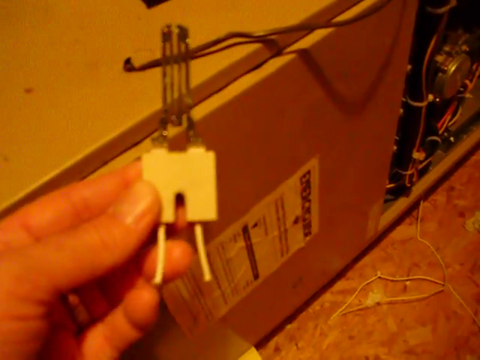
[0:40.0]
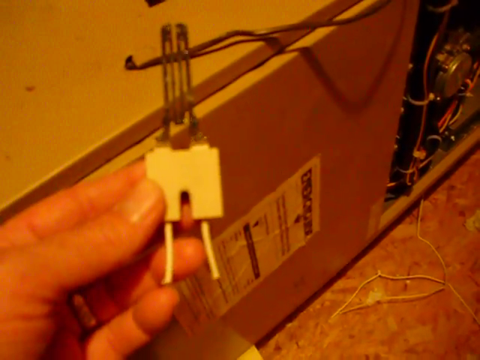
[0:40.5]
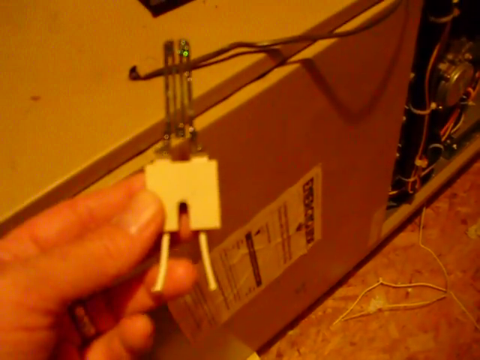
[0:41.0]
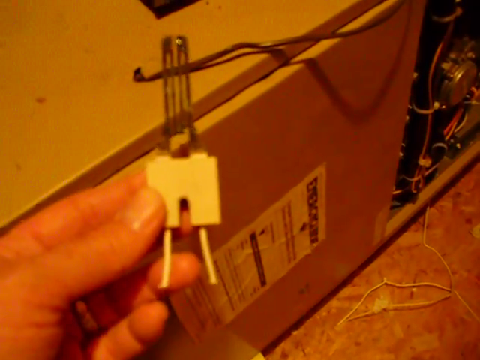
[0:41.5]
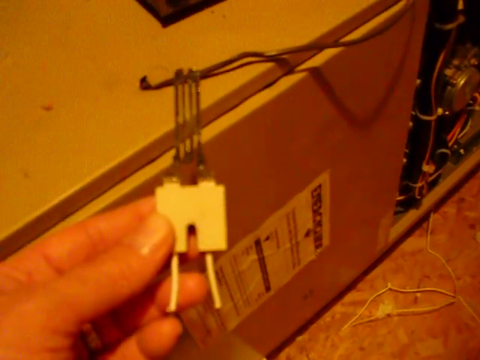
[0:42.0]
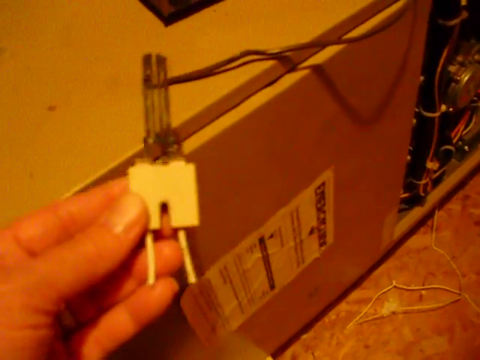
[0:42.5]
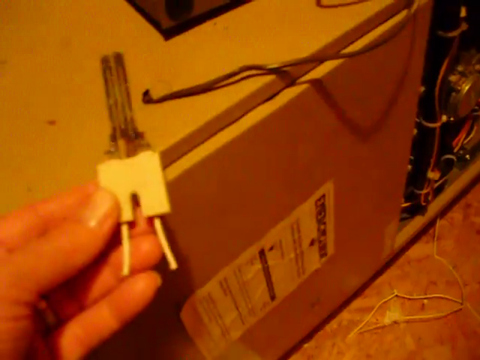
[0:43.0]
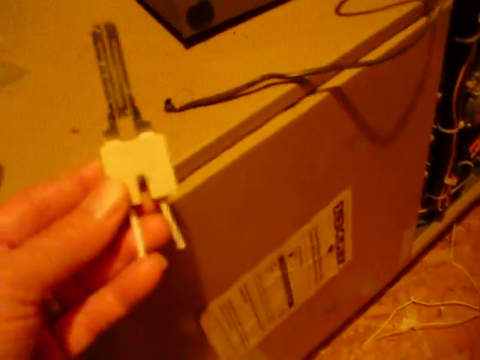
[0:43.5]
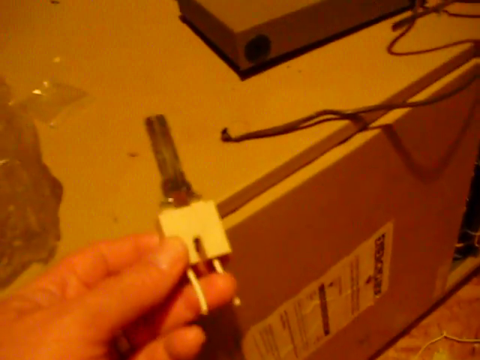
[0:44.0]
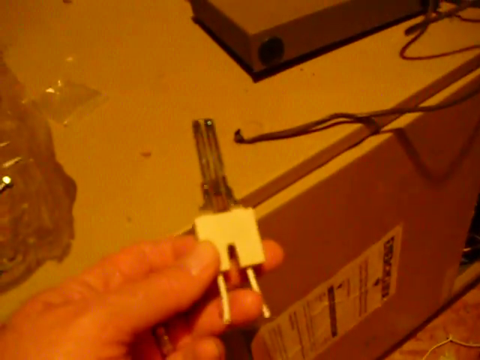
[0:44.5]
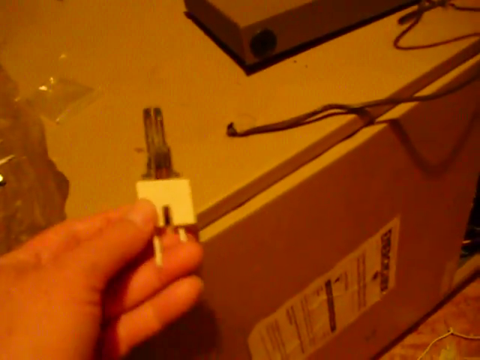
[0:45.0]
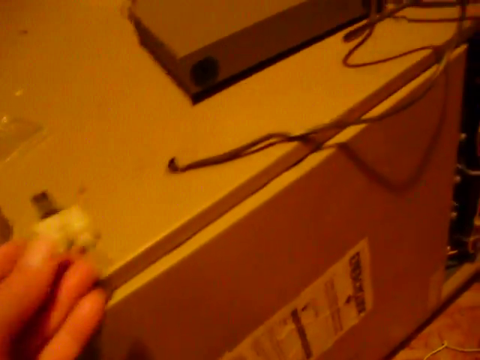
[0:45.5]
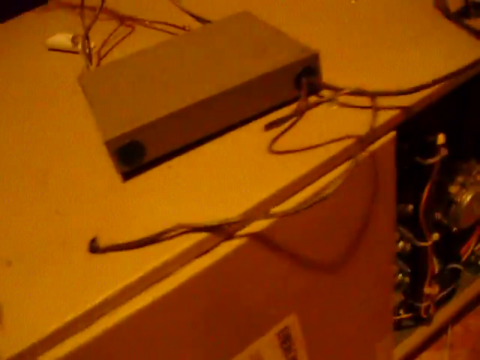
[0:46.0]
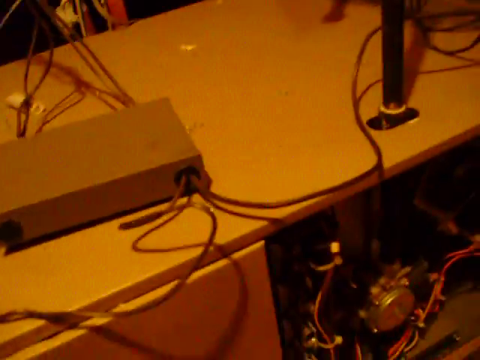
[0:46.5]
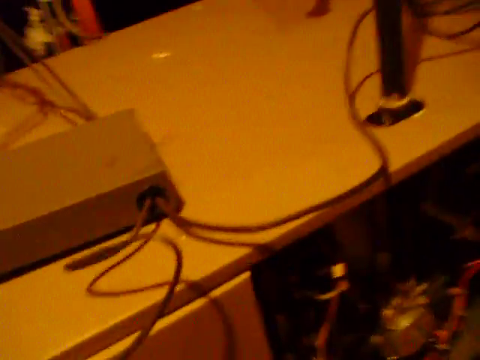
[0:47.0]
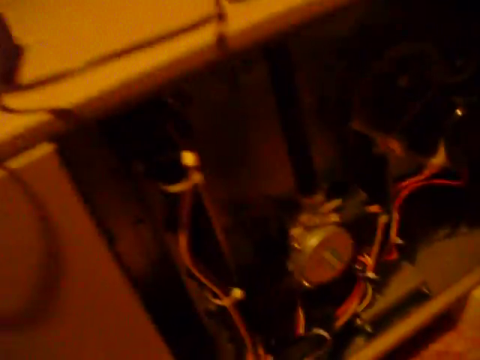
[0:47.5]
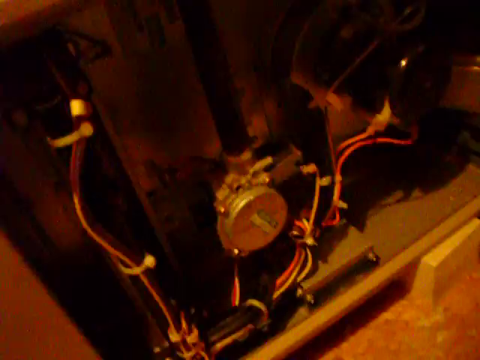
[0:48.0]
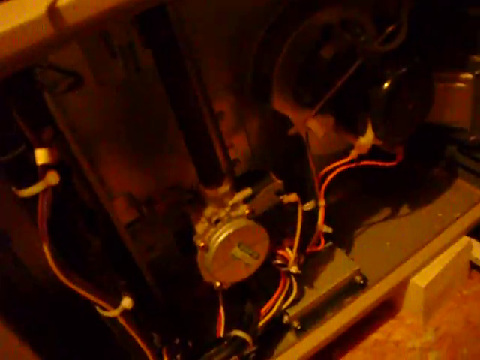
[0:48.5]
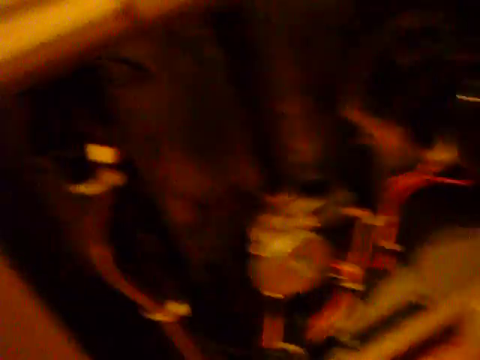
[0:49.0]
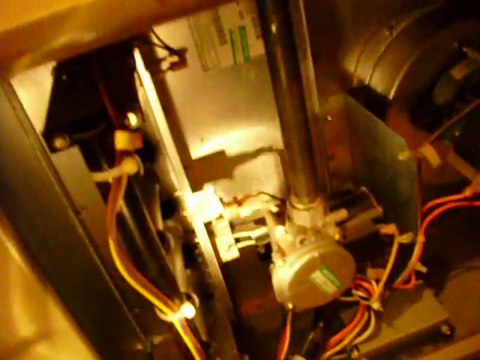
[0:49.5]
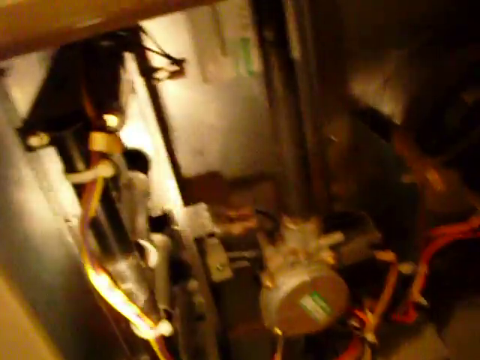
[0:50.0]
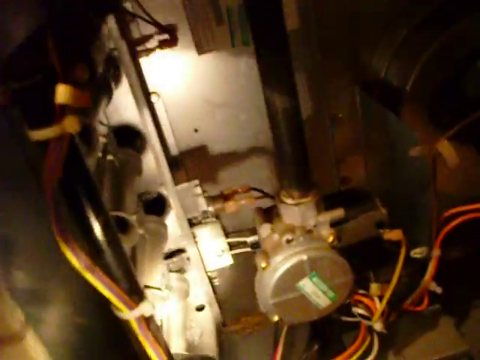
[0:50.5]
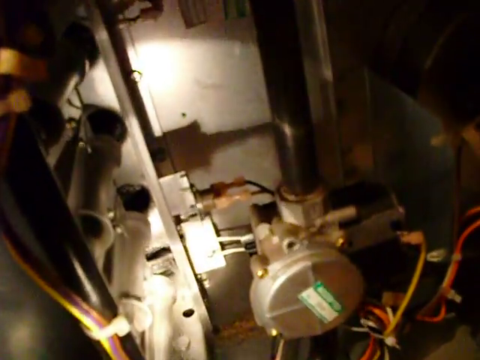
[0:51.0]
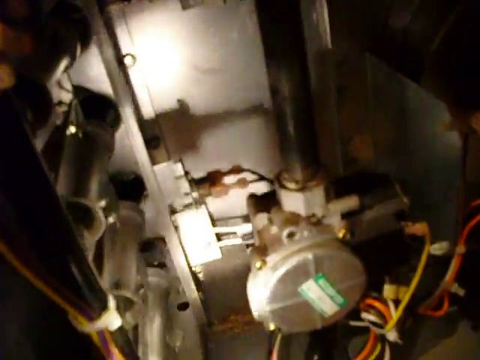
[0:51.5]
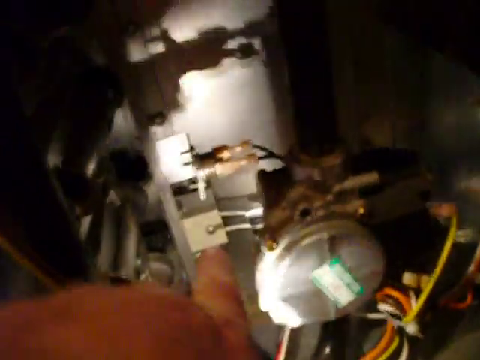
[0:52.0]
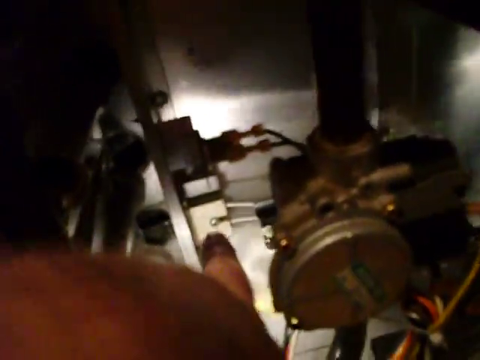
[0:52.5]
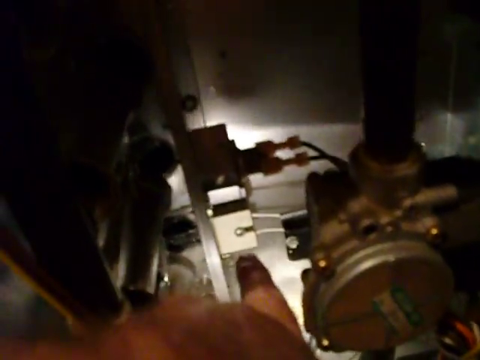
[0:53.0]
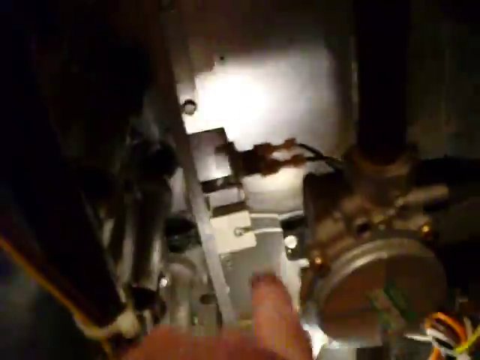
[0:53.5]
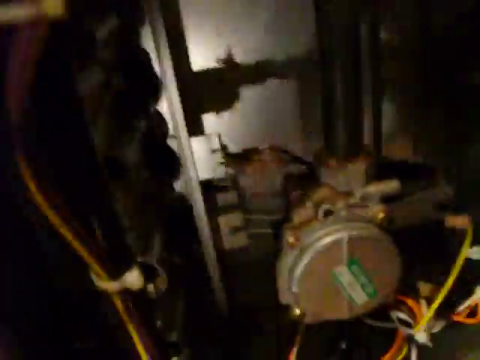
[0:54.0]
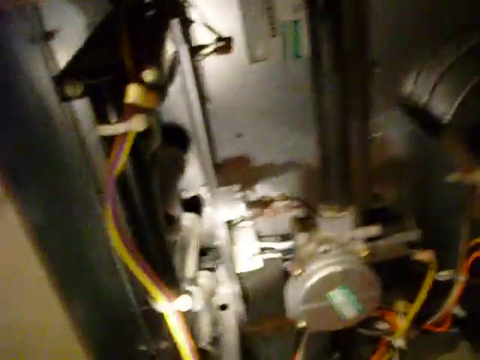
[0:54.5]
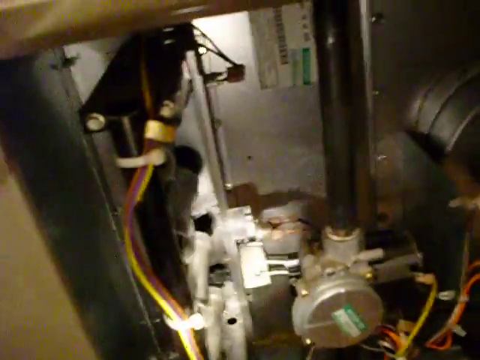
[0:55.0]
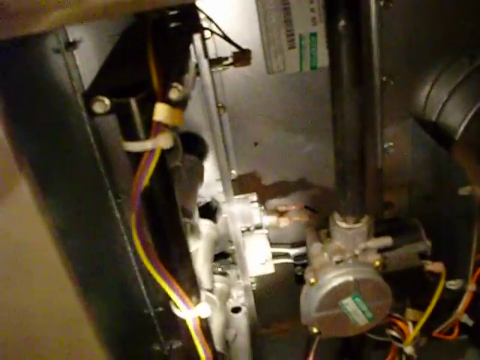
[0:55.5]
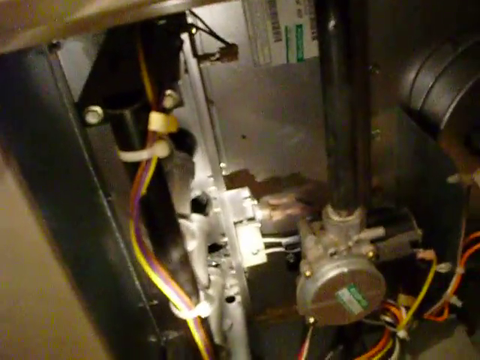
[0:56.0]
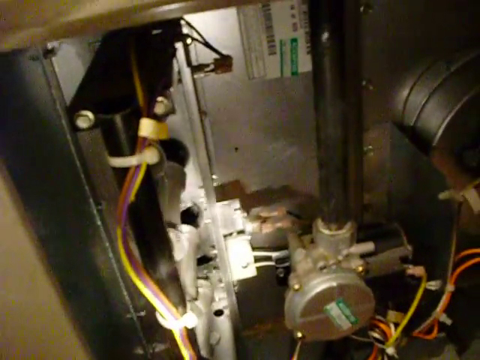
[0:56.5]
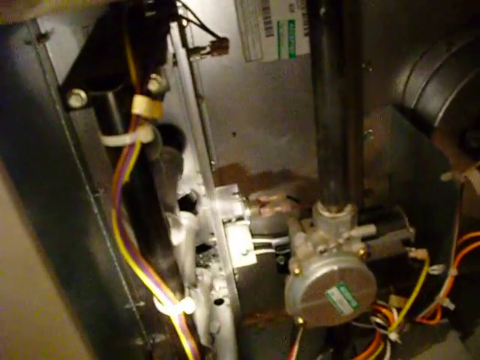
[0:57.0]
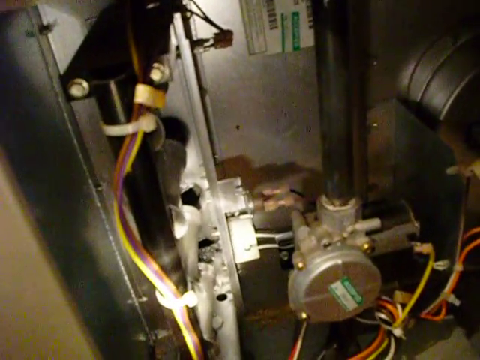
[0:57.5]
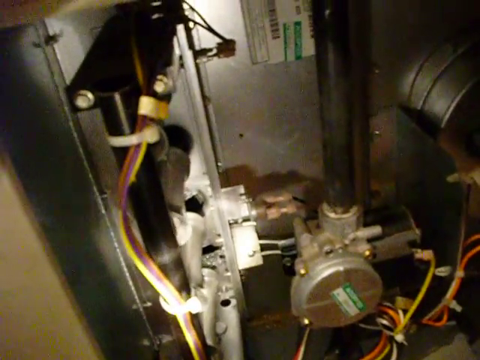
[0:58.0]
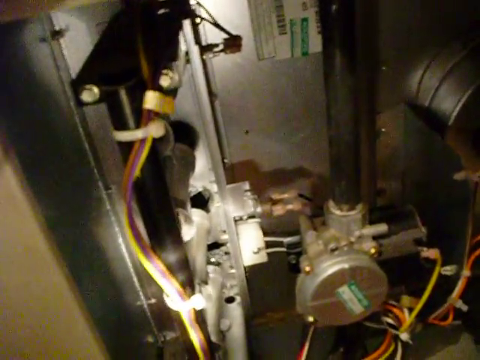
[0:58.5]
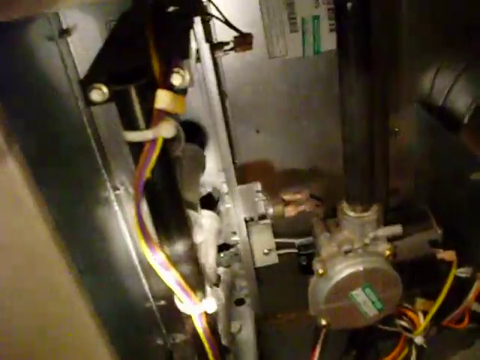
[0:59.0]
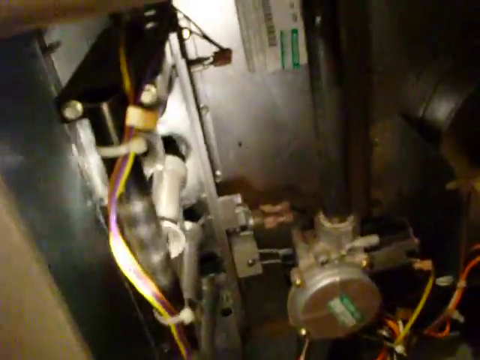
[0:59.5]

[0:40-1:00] The focus stays on the device held in the hand, a white plastic square with metal parts extending upwards and cut-off wires at the bottom, as the hand moves it around. After some moving around, the hand sets it down on top of the metal box with the removed panel. The camera then moves into the opening on the box and enters through it, revealing more details inside: cables of different colors running off in different directions, and lots of electrical circuits and smaller devices whose nature is hard to understand. As soon as the camera enters the opening, its flashlight turns on to illuminate the space. A finger points to different parts of the electrical setup.